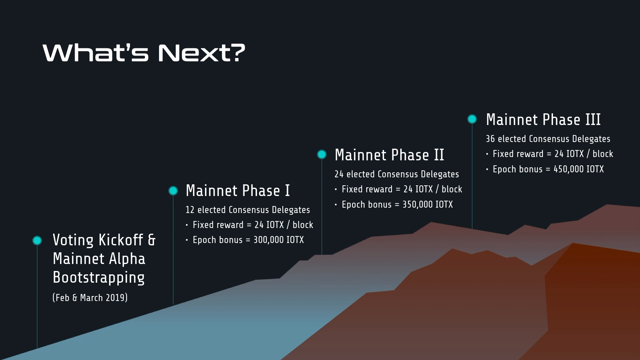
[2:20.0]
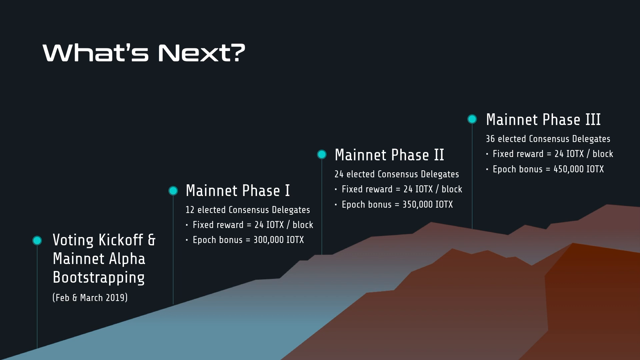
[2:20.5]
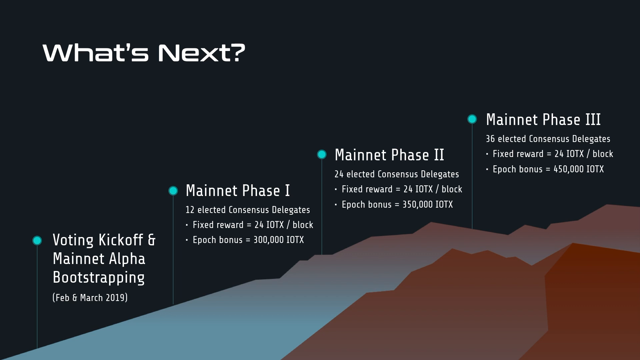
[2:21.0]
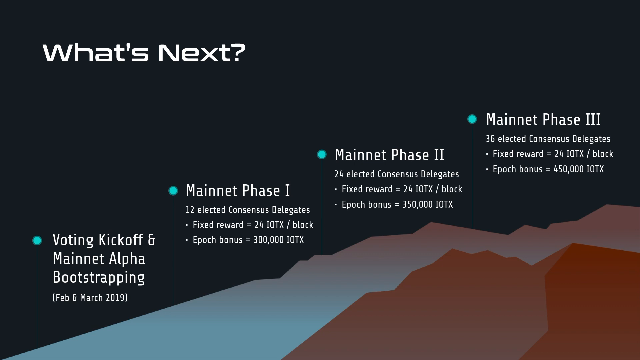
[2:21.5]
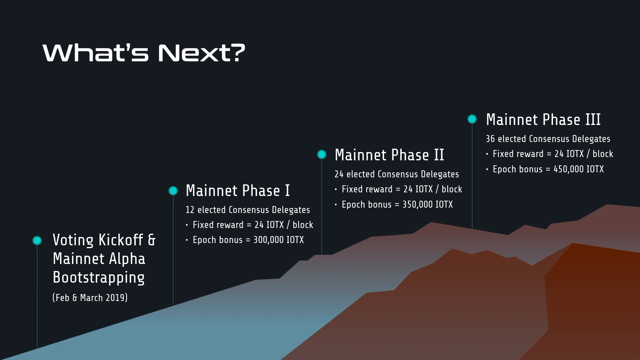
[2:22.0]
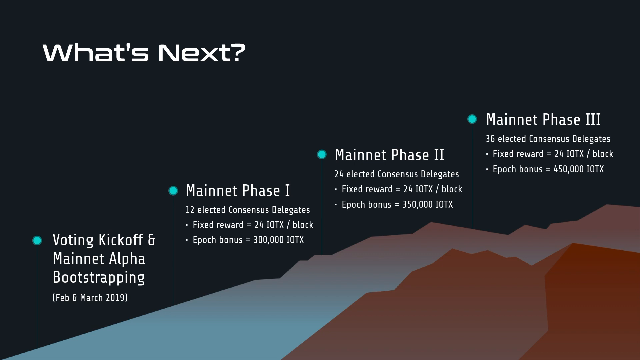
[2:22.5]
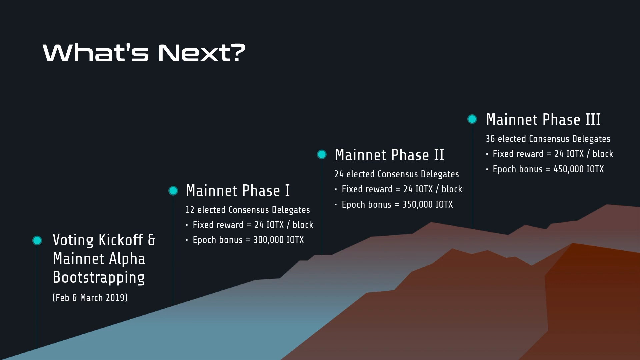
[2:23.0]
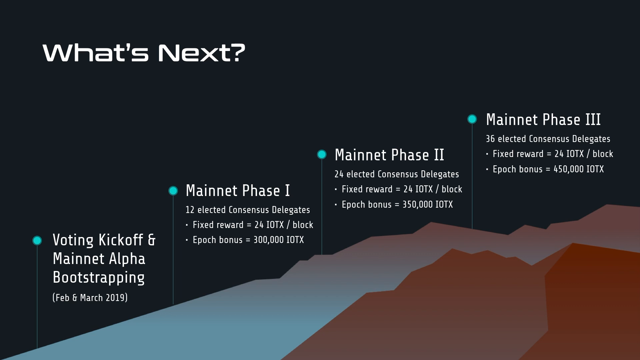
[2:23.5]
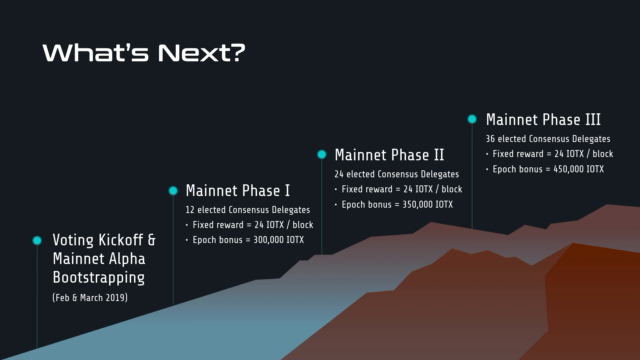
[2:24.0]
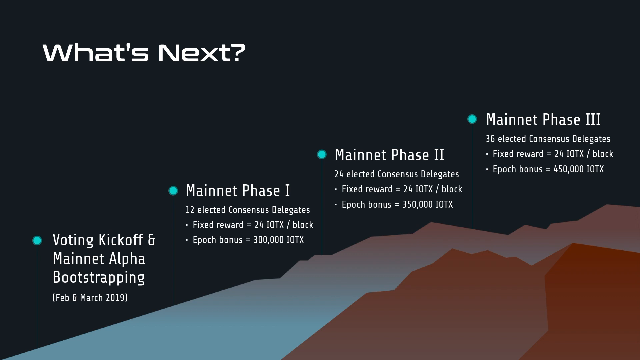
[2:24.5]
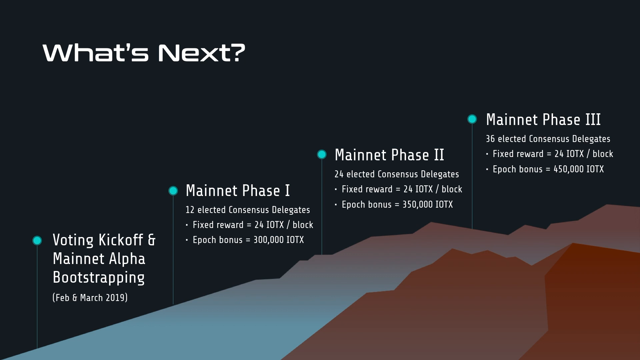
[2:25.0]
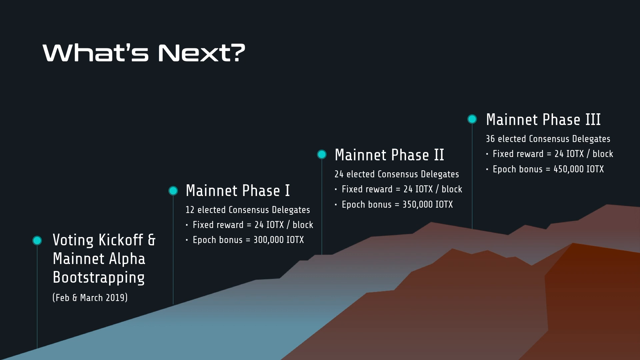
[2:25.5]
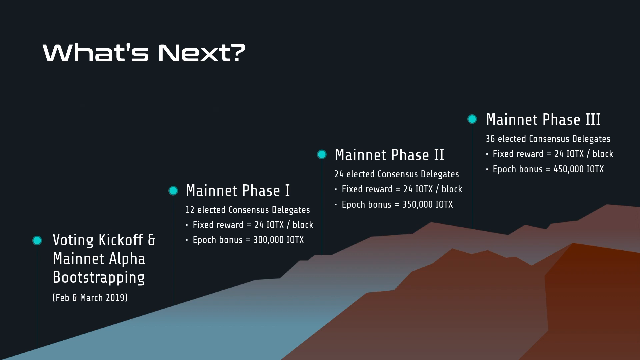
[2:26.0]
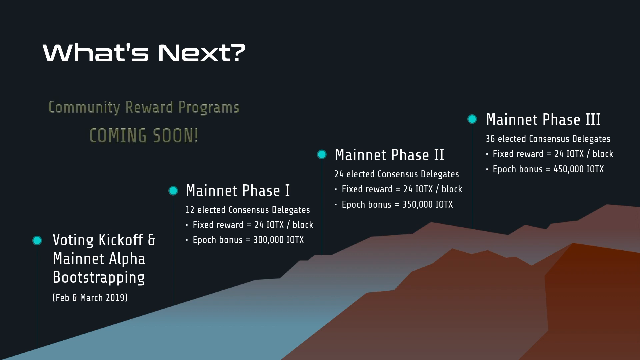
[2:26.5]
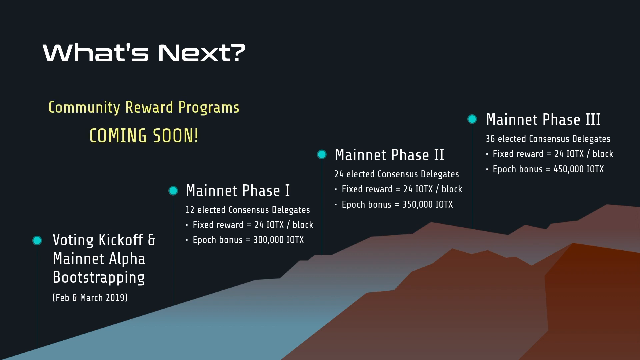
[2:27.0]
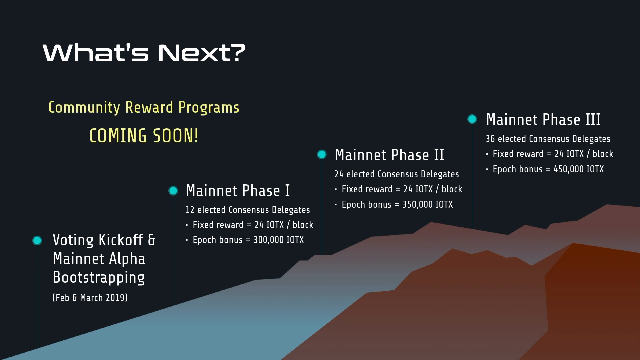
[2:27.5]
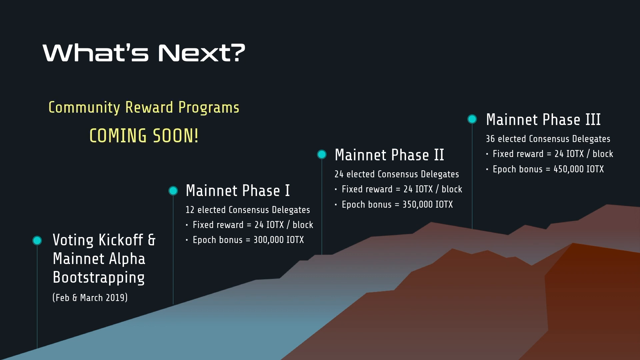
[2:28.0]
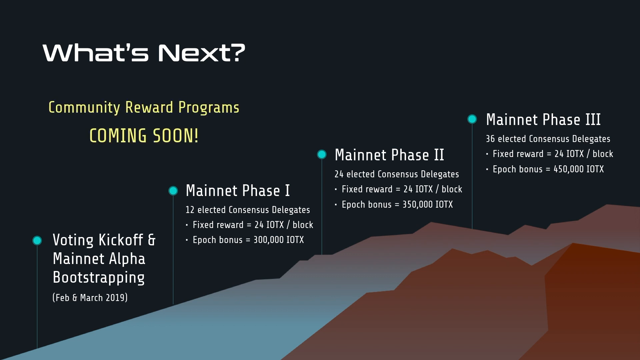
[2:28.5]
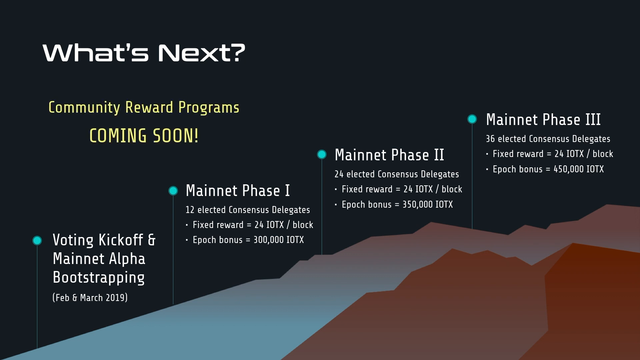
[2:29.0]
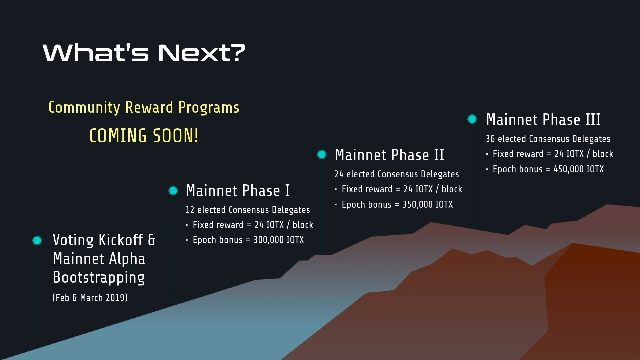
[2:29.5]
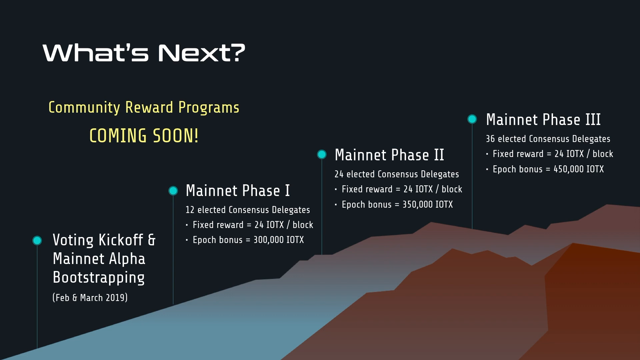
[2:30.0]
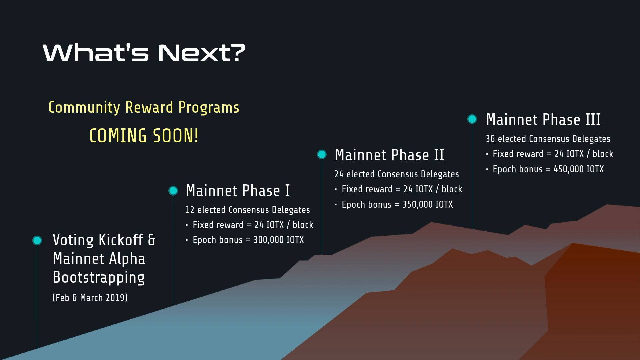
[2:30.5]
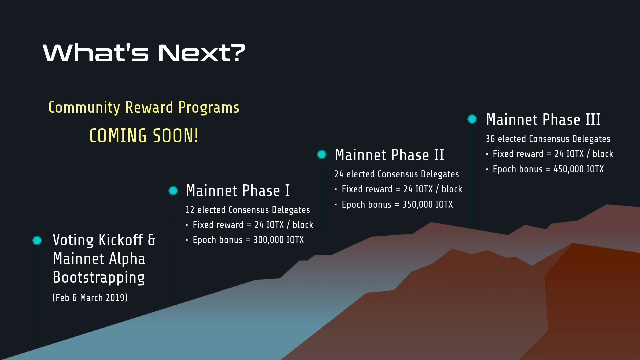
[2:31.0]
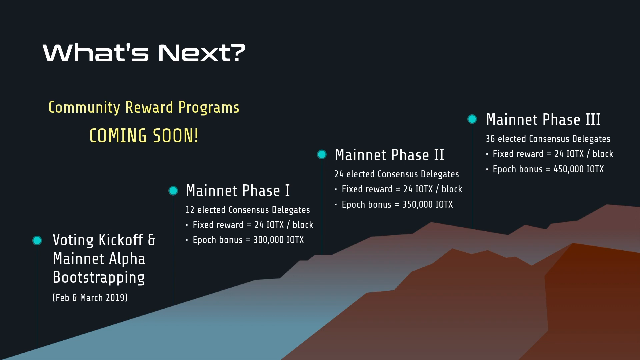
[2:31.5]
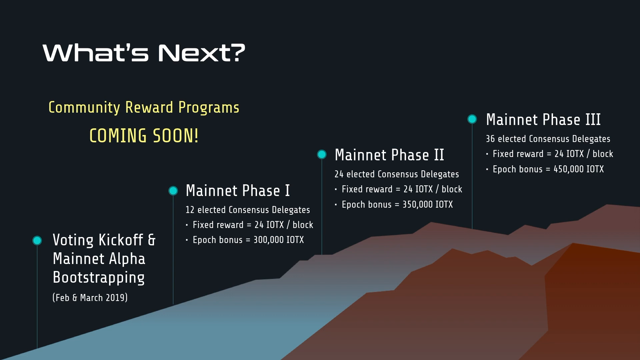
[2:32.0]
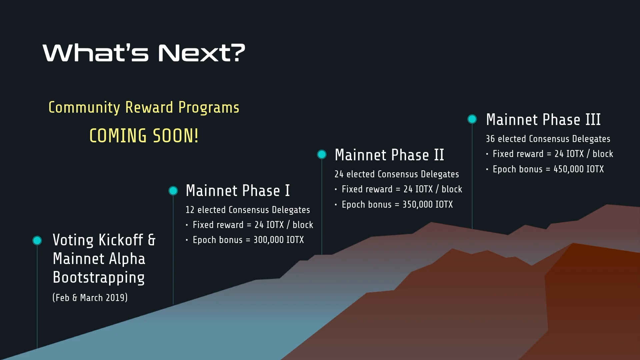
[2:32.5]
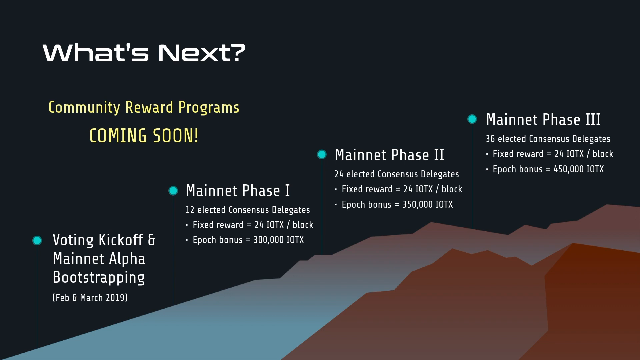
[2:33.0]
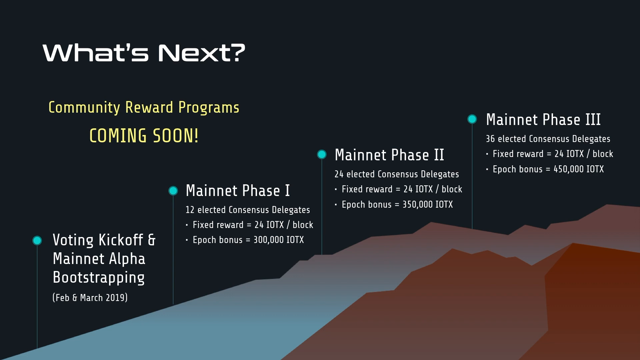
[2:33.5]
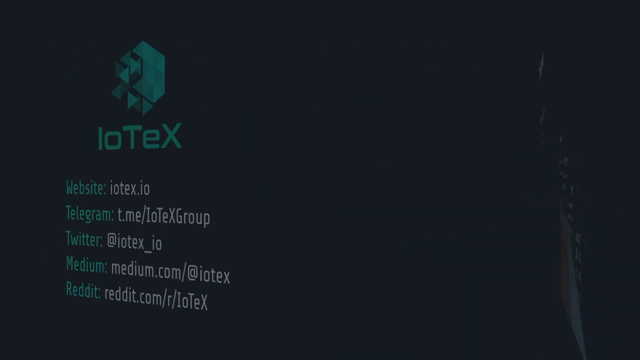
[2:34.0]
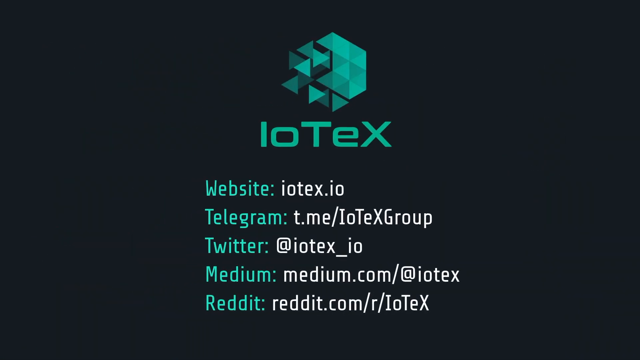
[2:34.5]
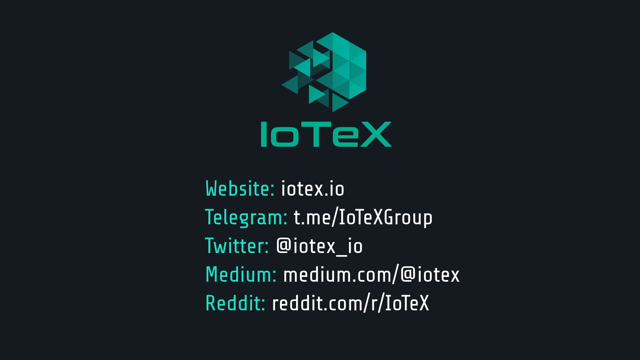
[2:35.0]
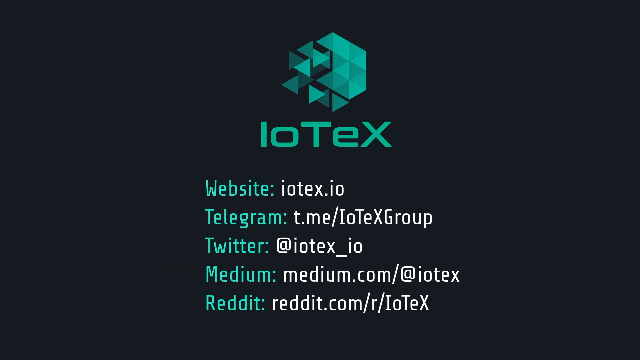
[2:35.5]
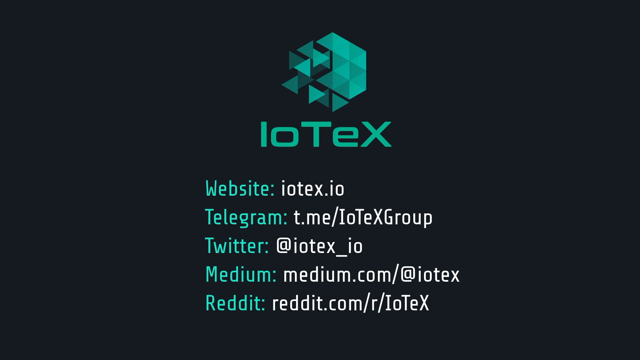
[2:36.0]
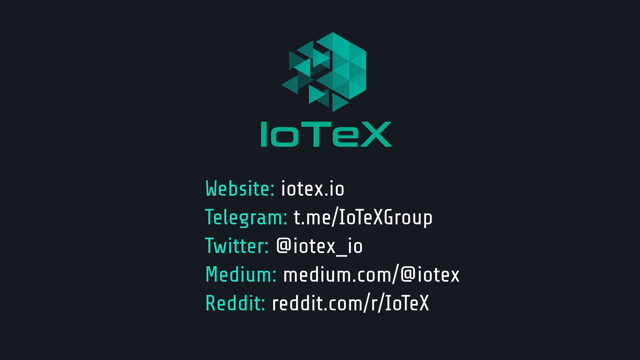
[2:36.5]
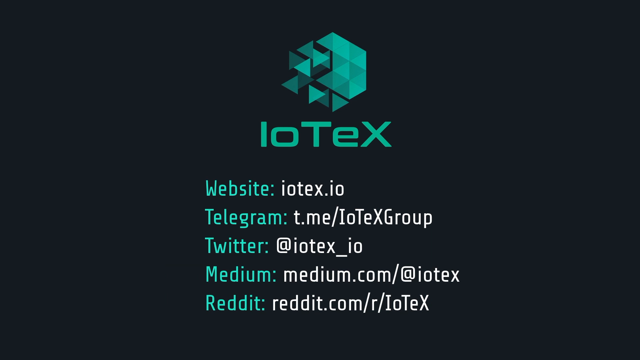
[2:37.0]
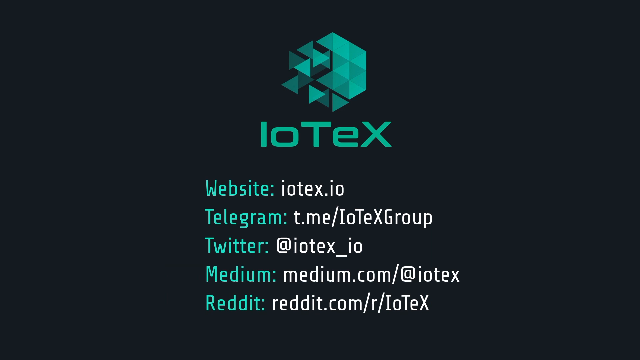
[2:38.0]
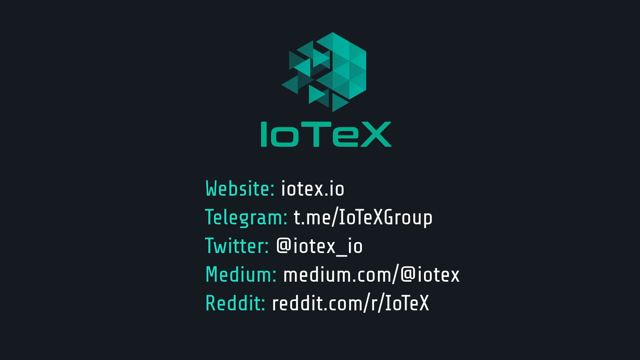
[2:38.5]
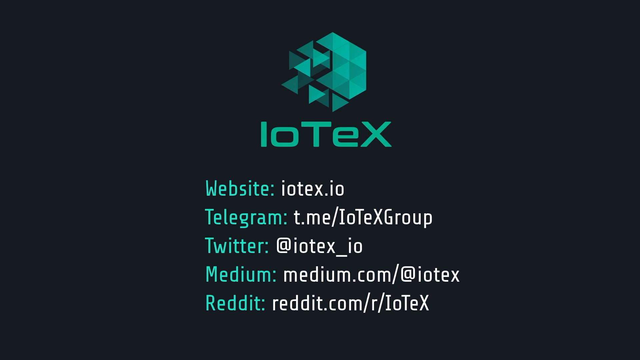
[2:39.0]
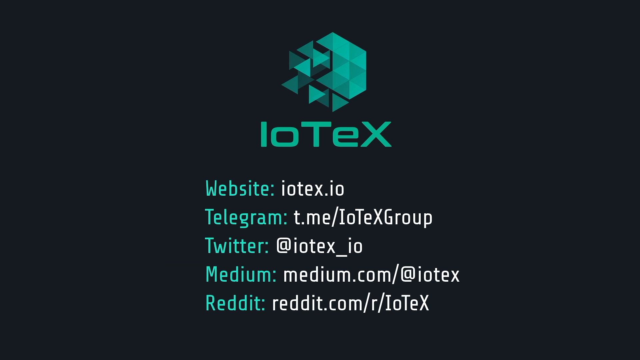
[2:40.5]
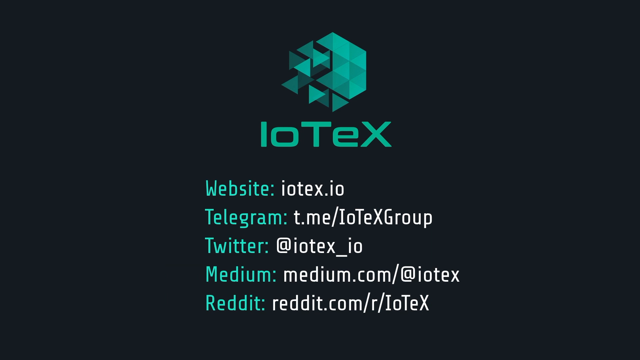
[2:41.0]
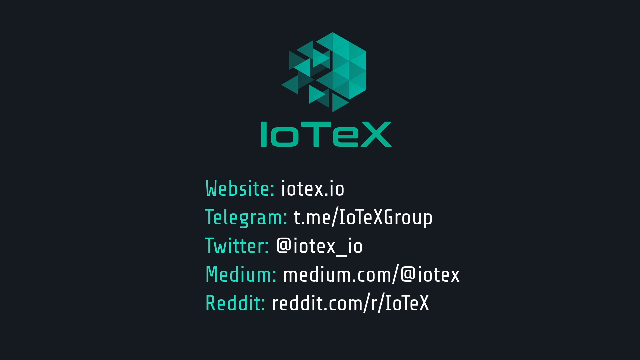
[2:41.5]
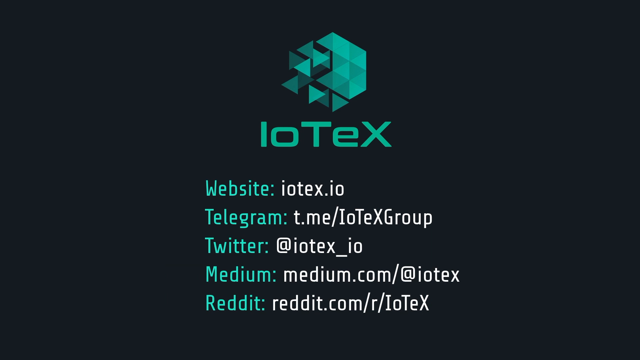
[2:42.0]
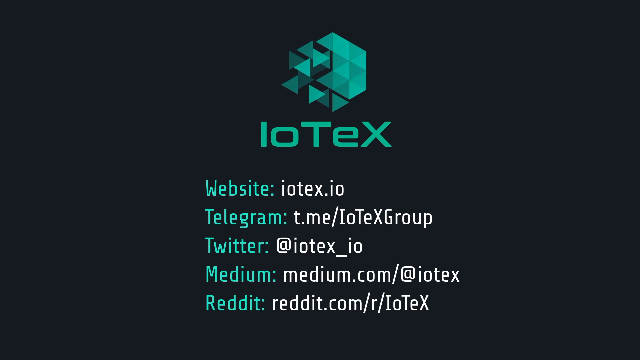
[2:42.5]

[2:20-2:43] A slide has white text reading "what's next" and something like a mountain range that looks somewhat computer animated, in white and a somewhat brownish orange color. Text runs from left to right up the mountain, starting at the bottom on the left side and gradually going up, with turquoise green bullet points and white text. Yellow text then pops out reading "community reward programs COMING SOON!", with "coming soon" in all caps and an exclamation point. The slide disappears and a new one comes up reading "IoTeX" with what looks somewhat like a pentagon made of many turquoise green triangles. Underneath is contact information; the left part of each line is in turquoise green, and the text after each colon is in white.